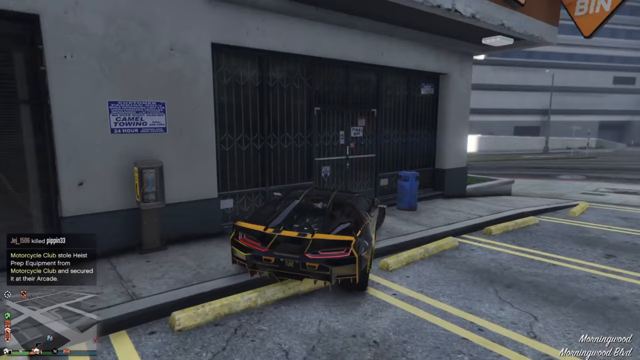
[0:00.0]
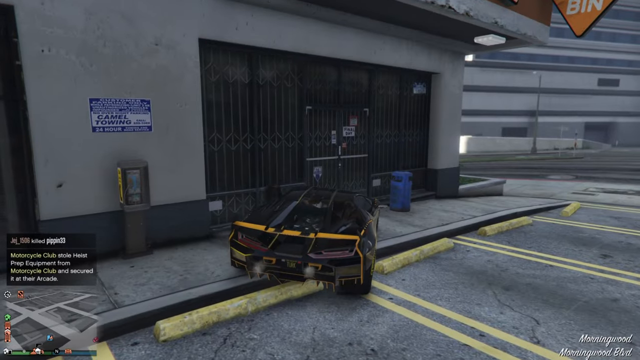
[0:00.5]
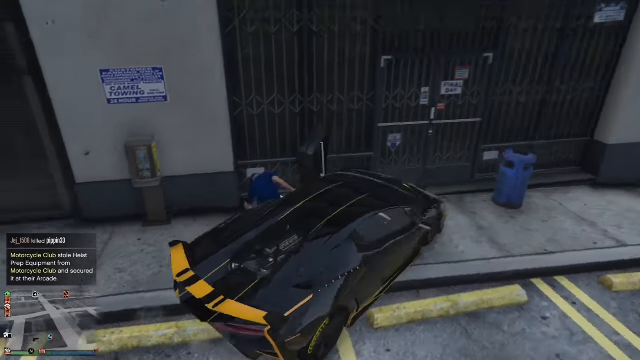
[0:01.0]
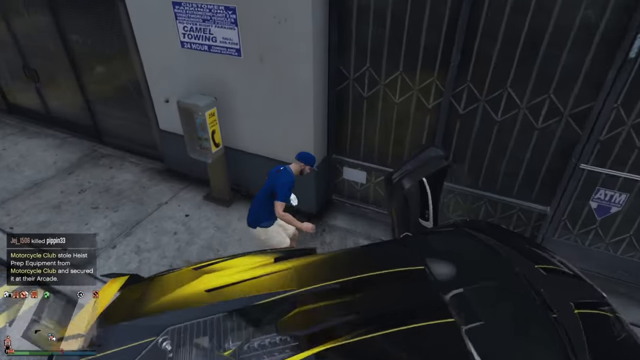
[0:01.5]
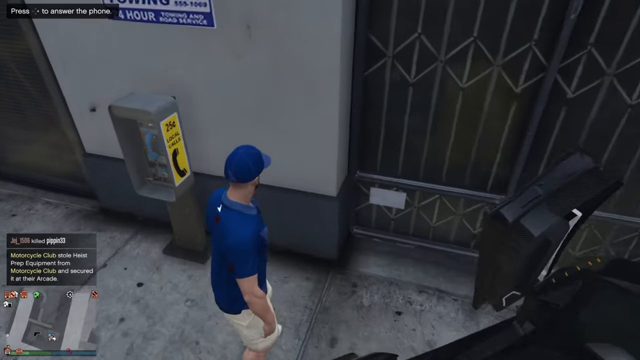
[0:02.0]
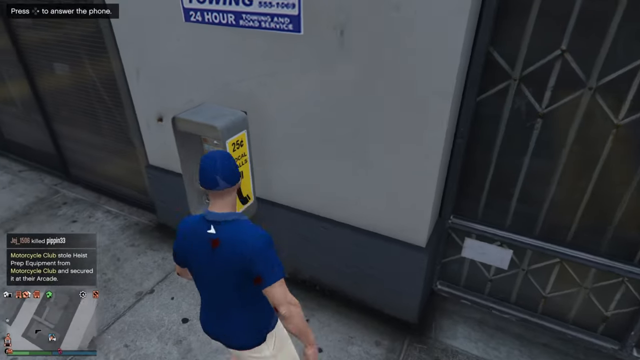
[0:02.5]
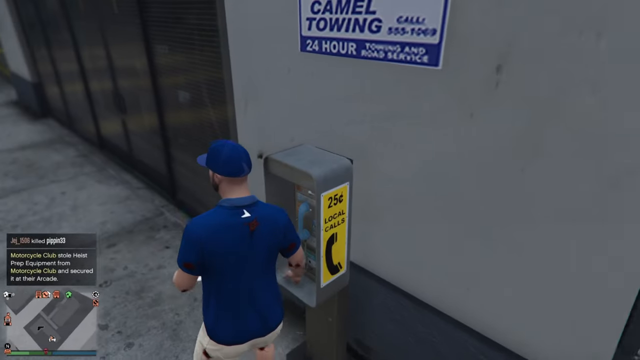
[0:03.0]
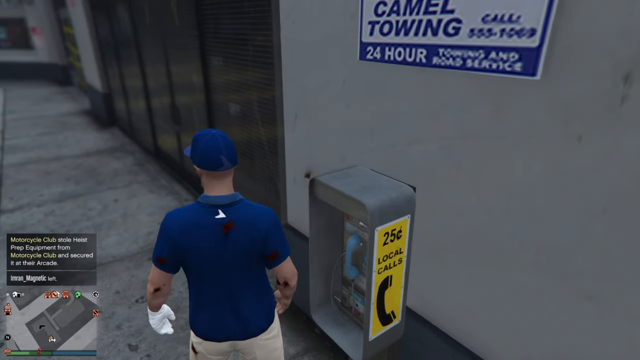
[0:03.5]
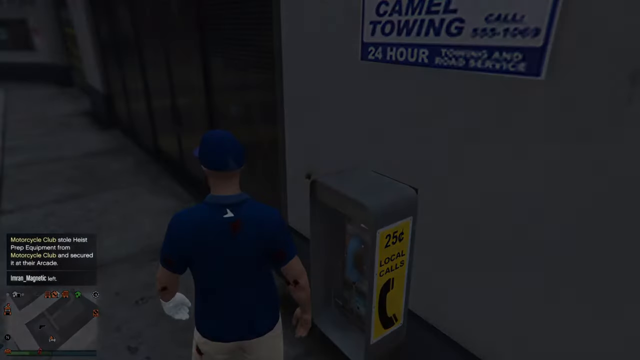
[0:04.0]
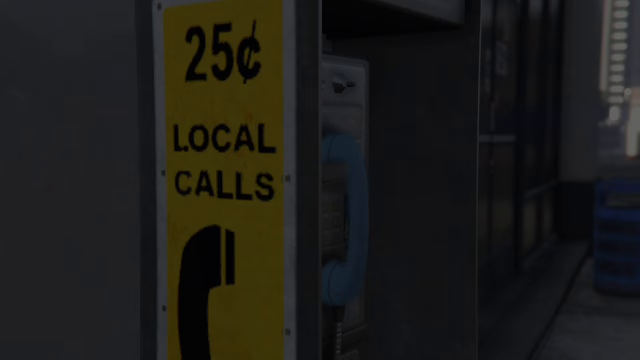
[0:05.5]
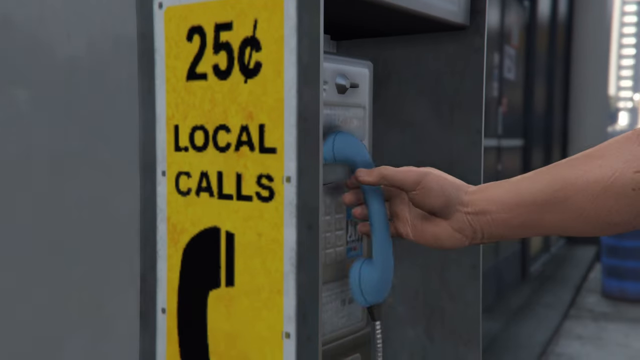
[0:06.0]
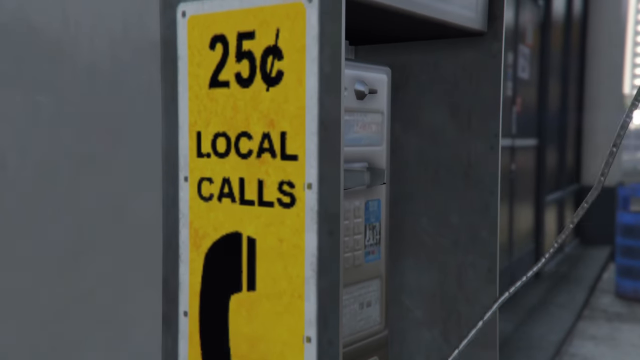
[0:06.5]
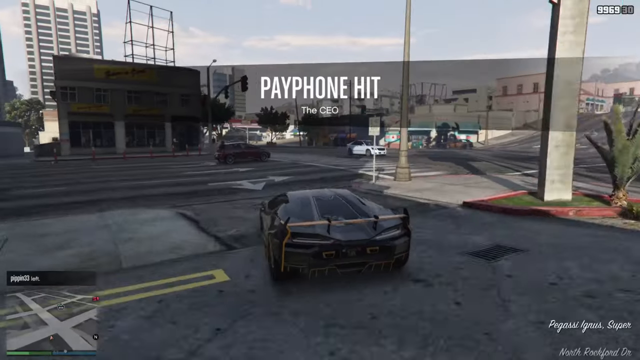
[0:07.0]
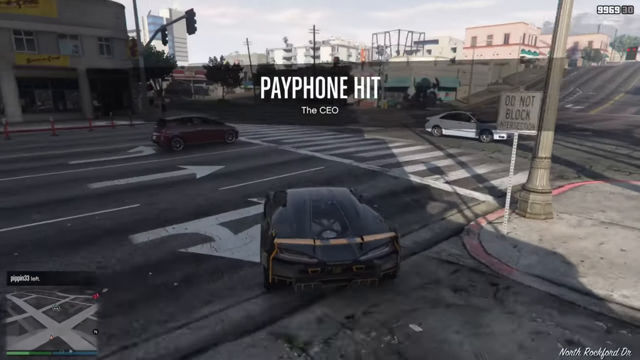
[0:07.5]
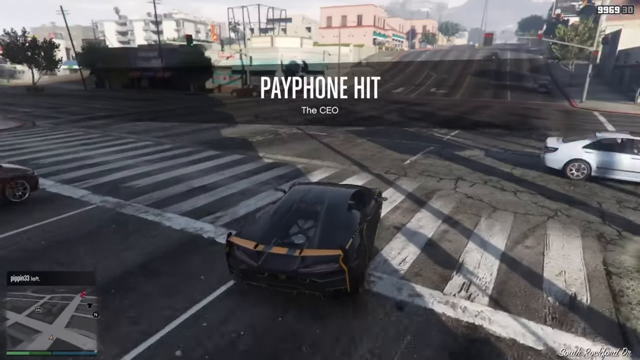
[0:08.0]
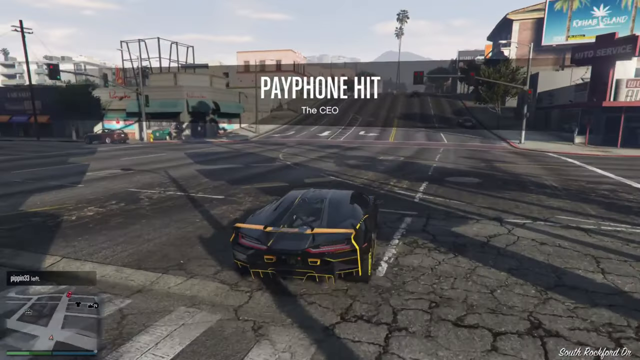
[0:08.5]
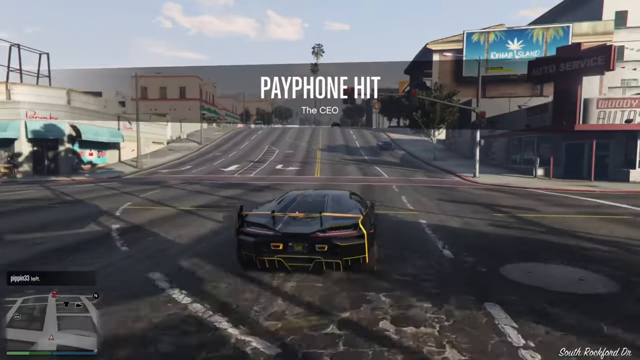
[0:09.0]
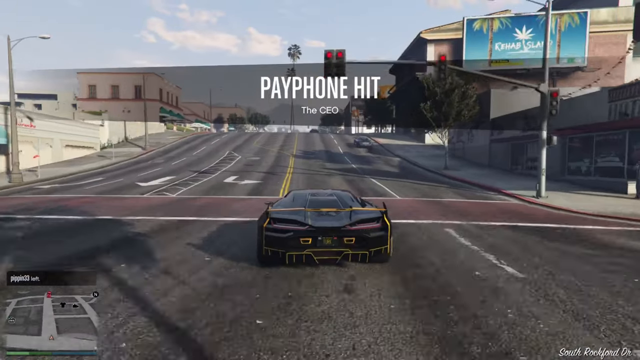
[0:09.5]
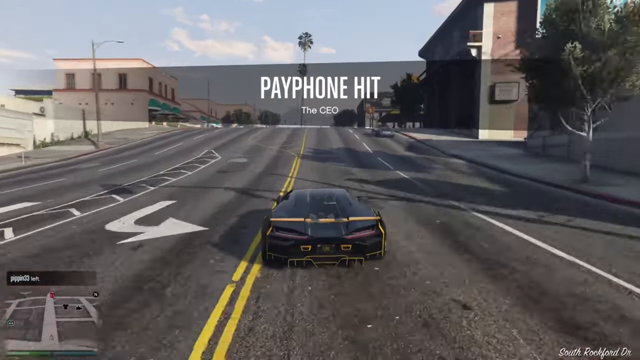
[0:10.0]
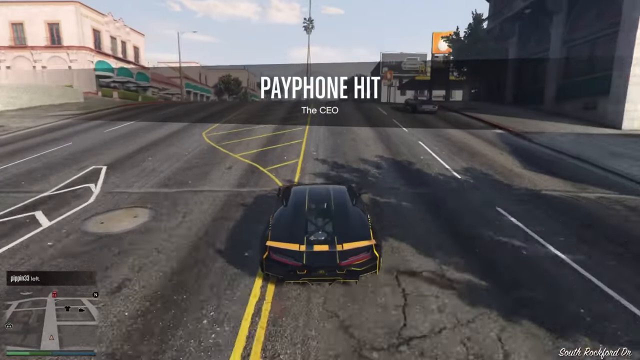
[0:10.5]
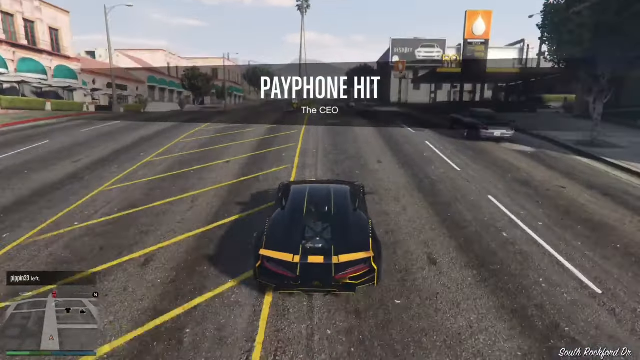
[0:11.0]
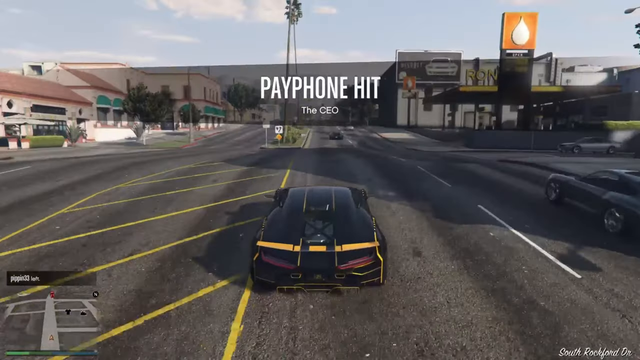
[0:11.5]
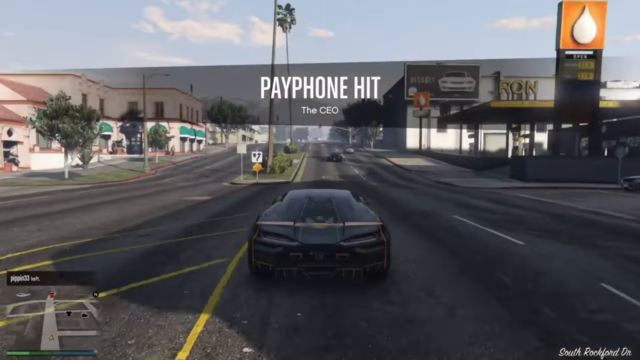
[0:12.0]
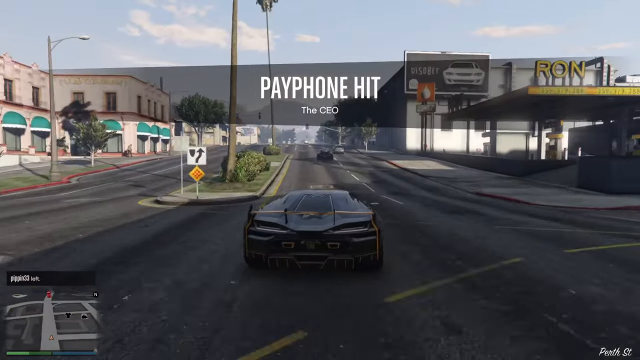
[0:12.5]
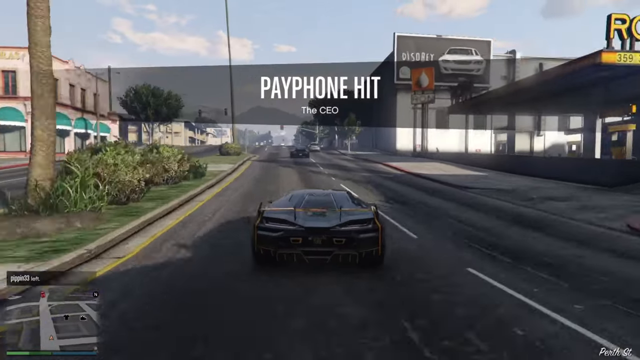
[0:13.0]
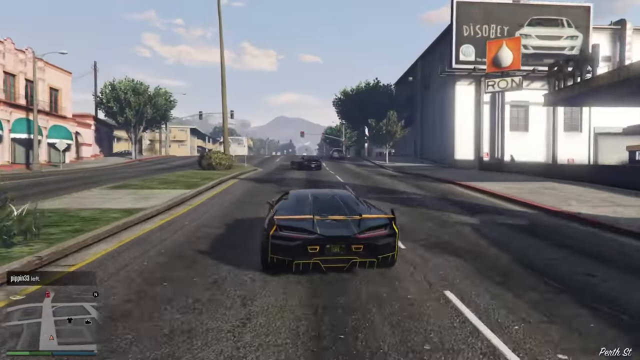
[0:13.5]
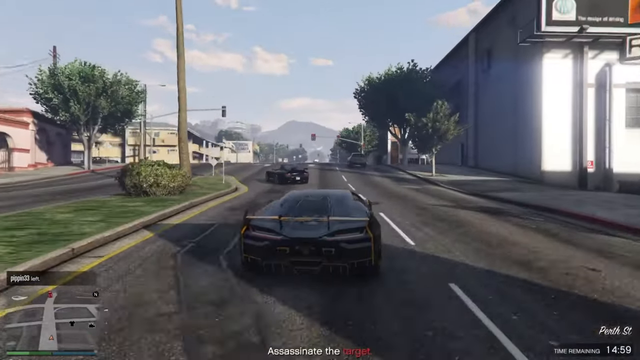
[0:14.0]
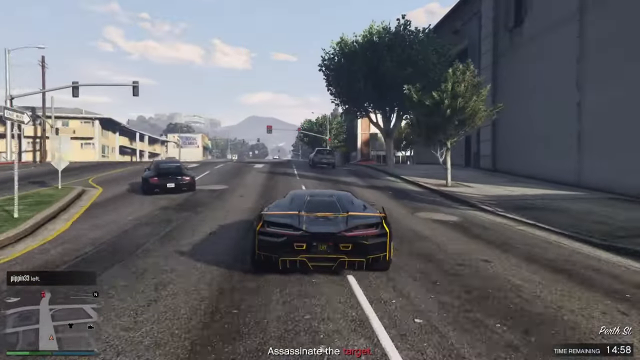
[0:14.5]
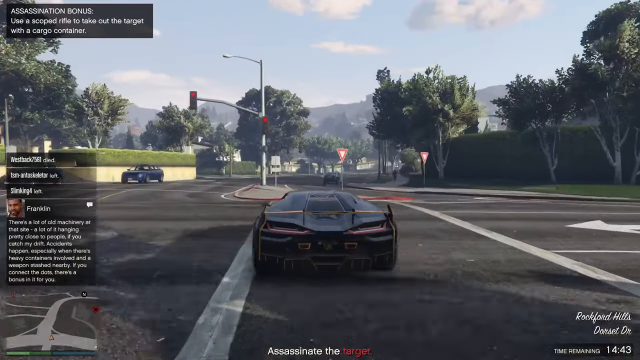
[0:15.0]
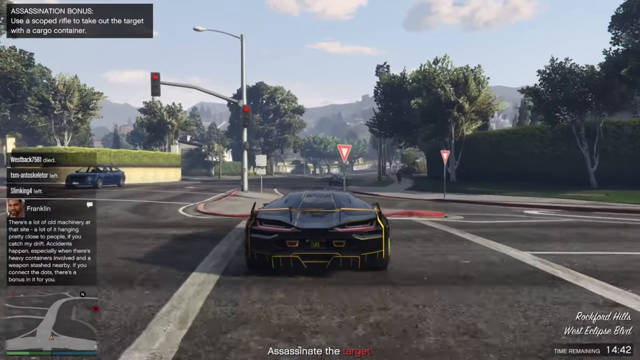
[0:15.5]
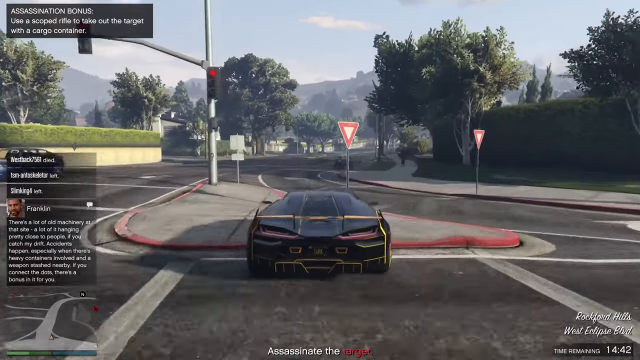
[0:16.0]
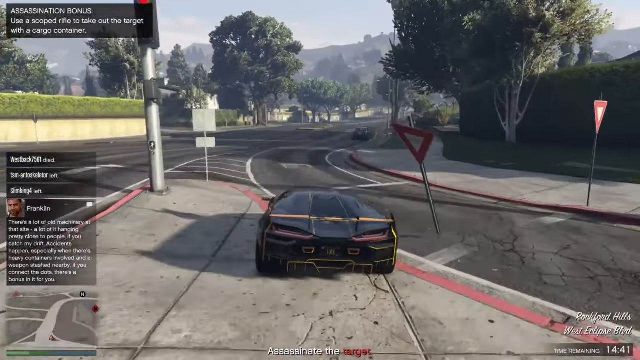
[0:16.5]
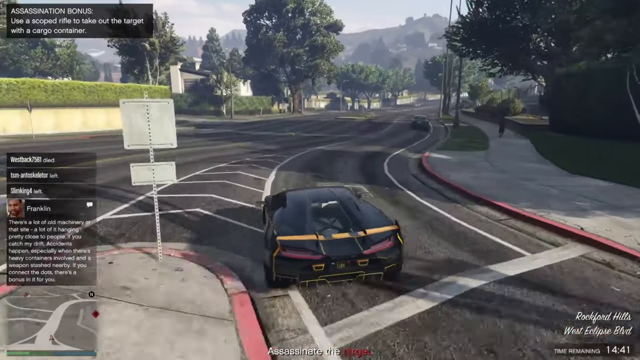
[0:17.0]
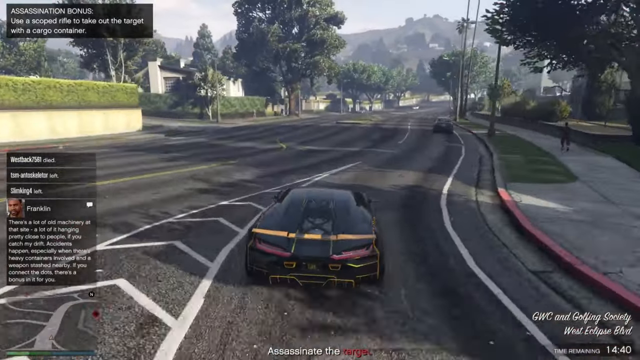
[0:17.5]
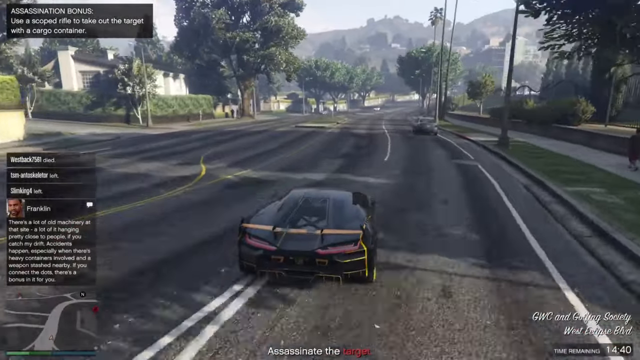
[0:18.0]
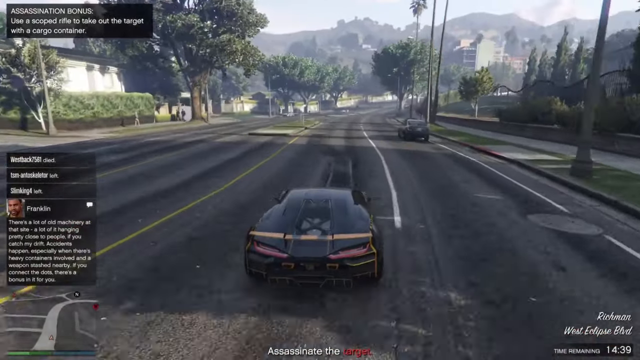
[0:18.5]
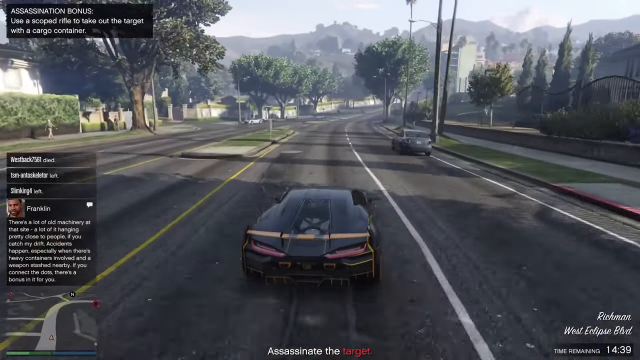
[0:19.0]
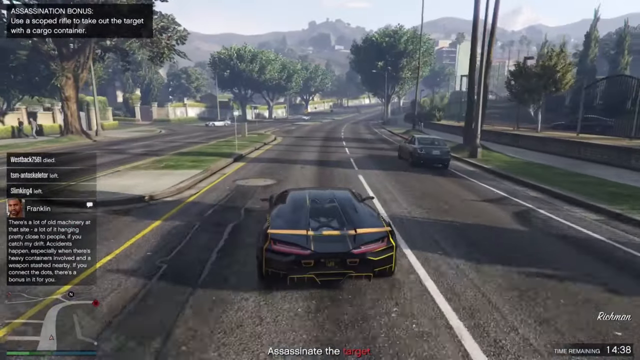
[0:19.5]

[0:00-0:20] A vehicle is in the middle of the screen; it is primarily black with some yellowing on the back. A person gets out of the left side of the vehicle, and the camera zooms in on them, showing a blue shirt and a blue hat. At the bottom left is what looks like a grayish map, and above it text reads "motorcycle club, stole heist prep equipment from motorcycle club and secured it at their arcade." In front of the man, a phone is attached to a wall, with a pasting on it that says "$0.25 of local calls" along with a picture of a phone. The screen goes black for a second, and then the scene changes to the car driving on the road. Text in the top middle says "payphone hit," with "the CEO" underneath. The man drives the black and yellow vehicle straight down the road, kind of swerving a little as if he were drunk, and hits a stop sign. Text at the bottom says "assassinate." As he keeps driving, text appears on the left with a message from someone named Franklin, a black male.